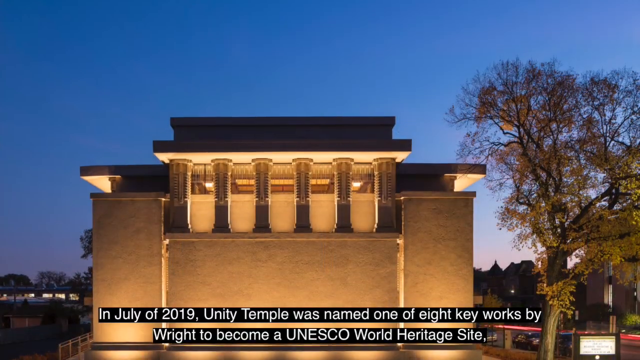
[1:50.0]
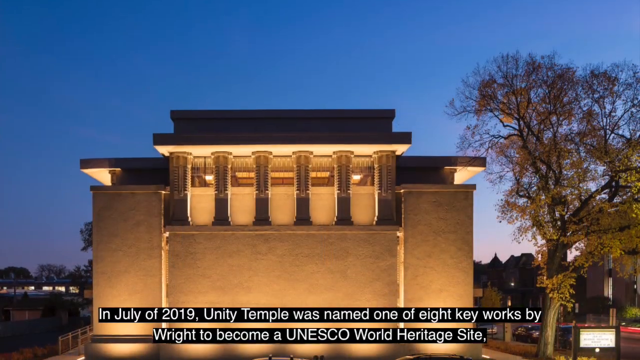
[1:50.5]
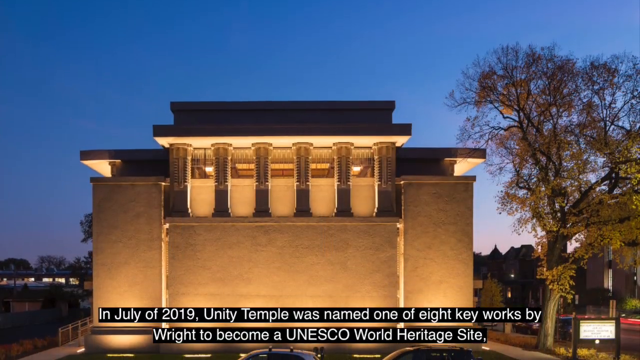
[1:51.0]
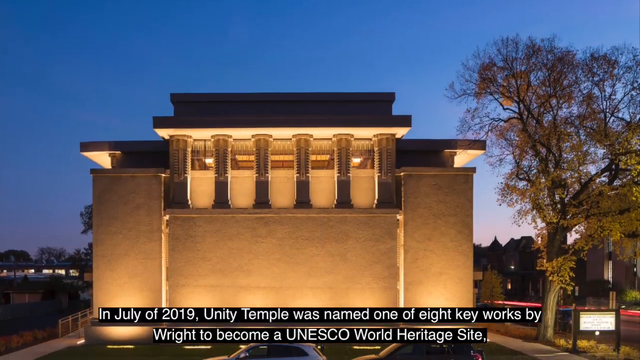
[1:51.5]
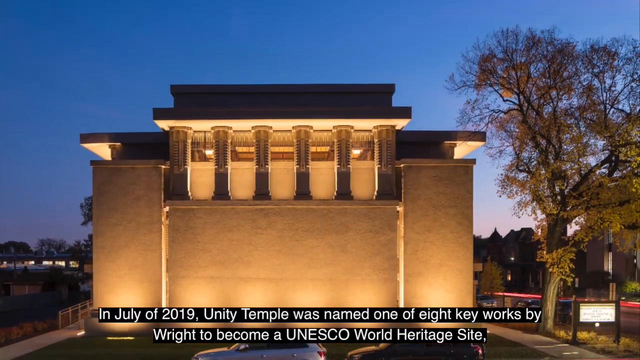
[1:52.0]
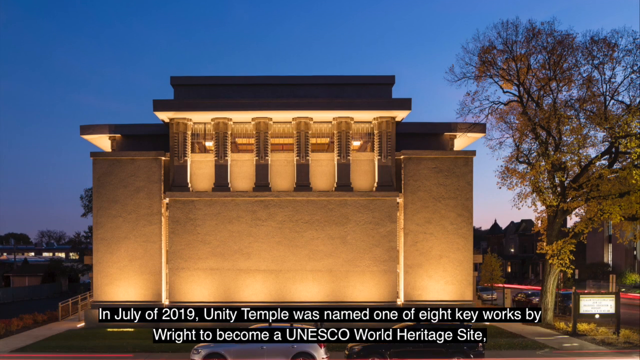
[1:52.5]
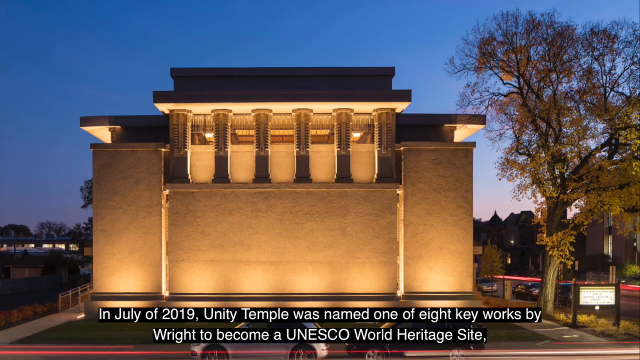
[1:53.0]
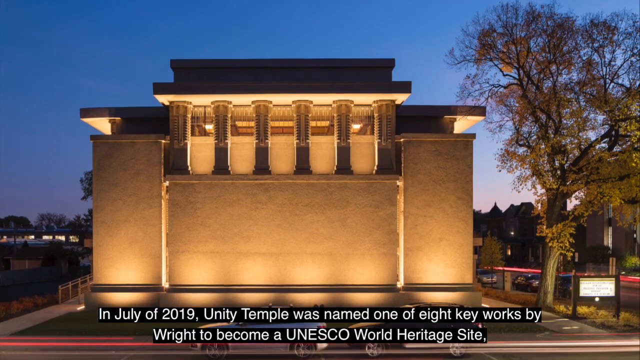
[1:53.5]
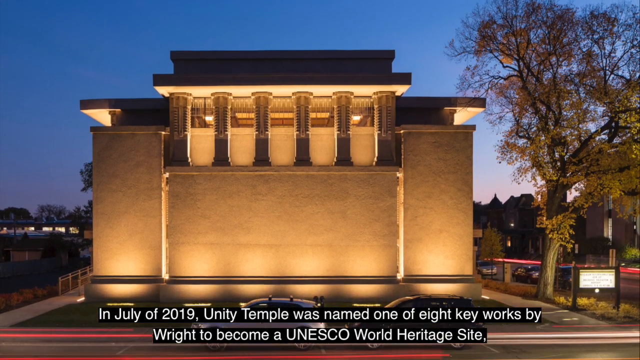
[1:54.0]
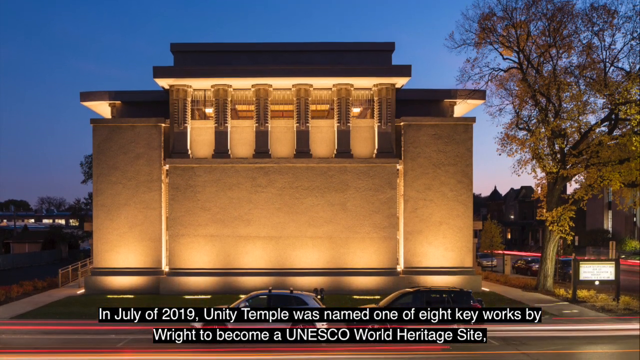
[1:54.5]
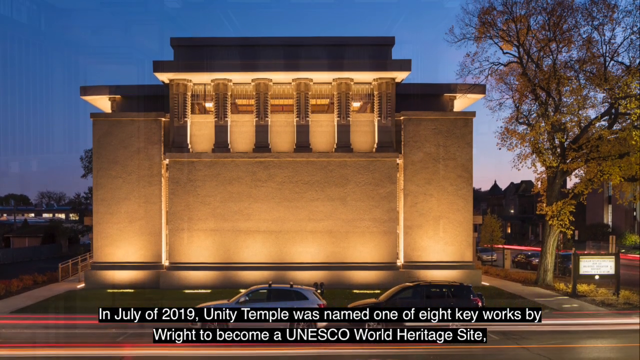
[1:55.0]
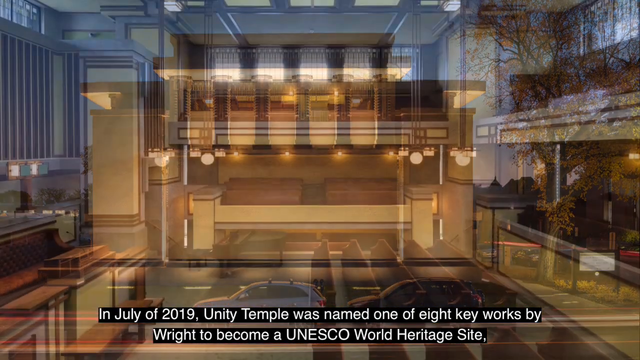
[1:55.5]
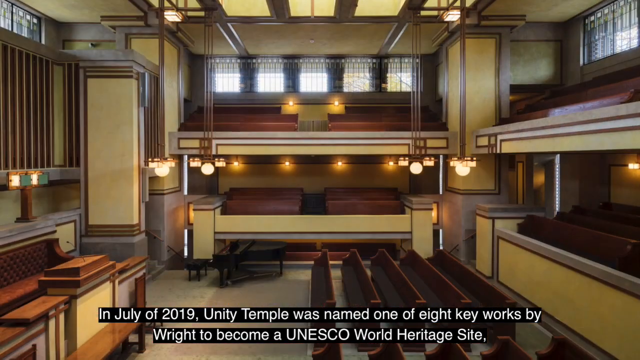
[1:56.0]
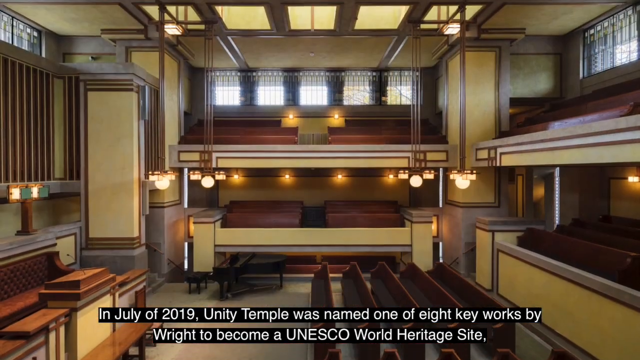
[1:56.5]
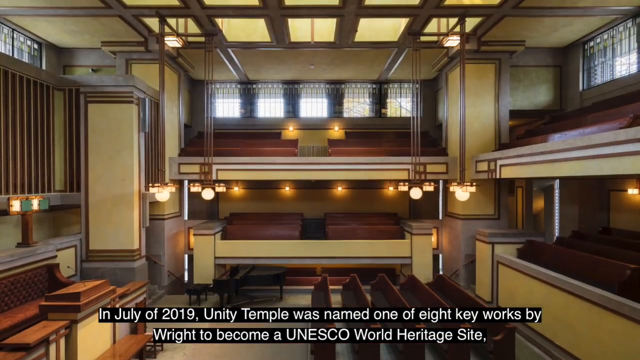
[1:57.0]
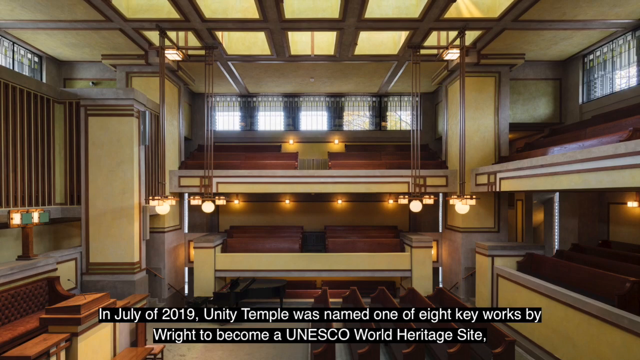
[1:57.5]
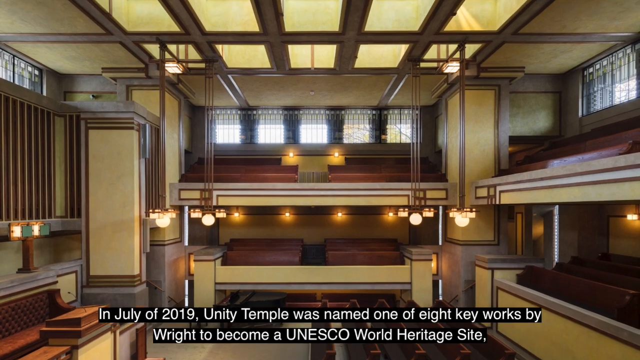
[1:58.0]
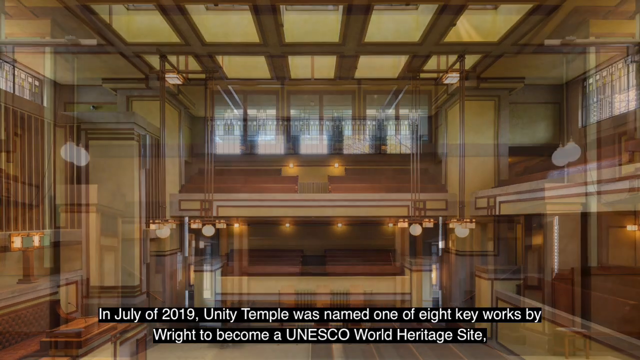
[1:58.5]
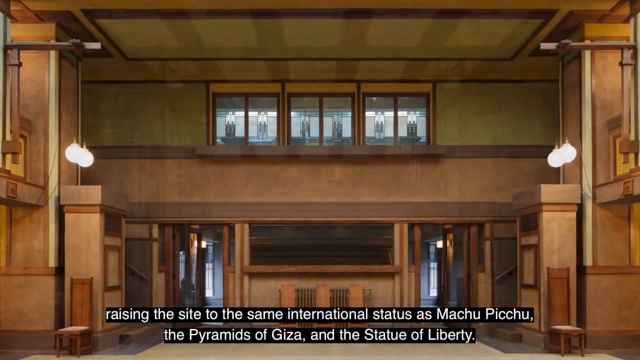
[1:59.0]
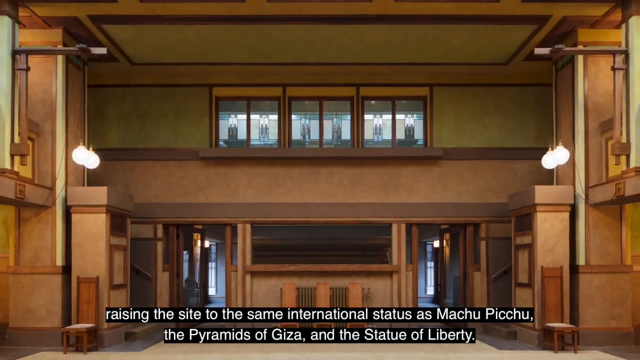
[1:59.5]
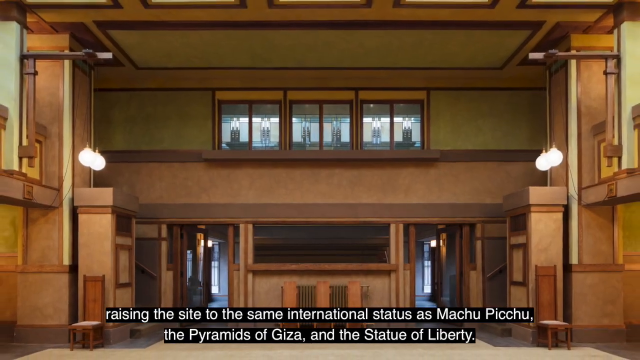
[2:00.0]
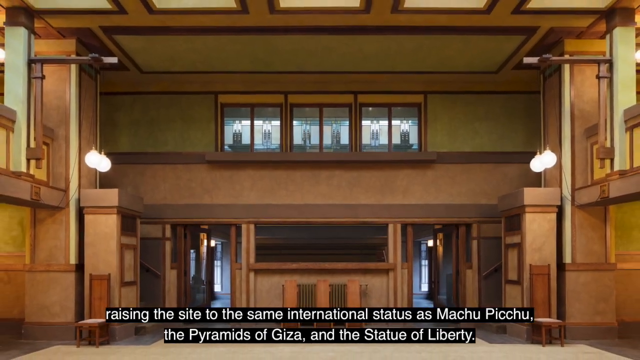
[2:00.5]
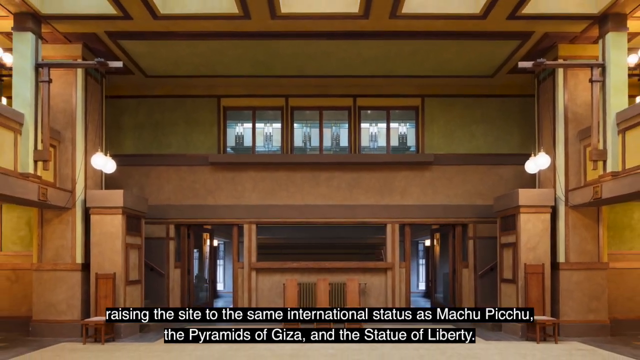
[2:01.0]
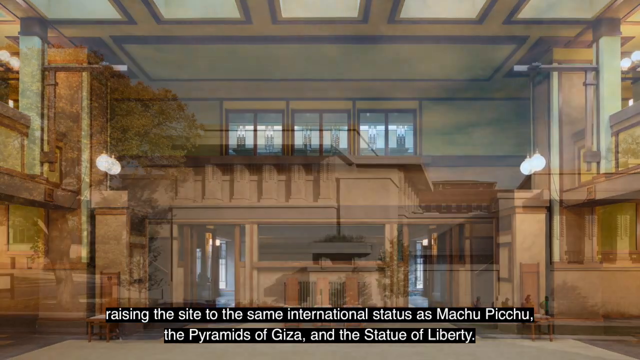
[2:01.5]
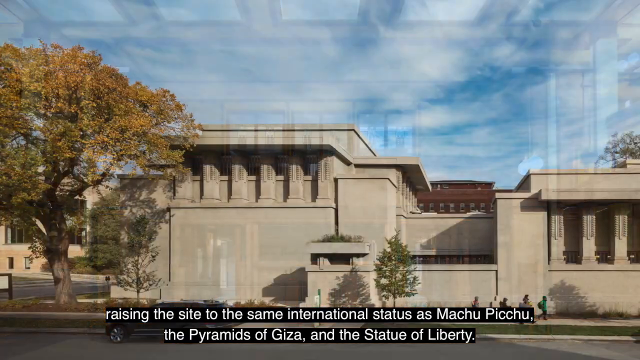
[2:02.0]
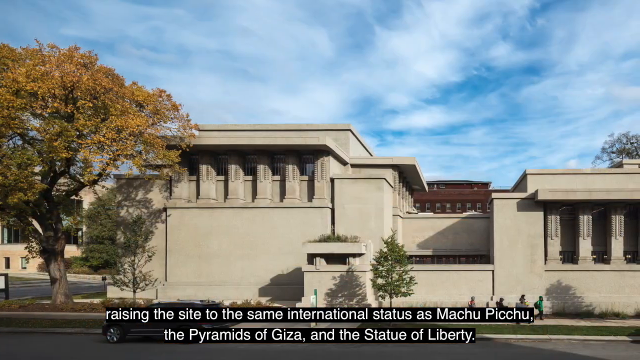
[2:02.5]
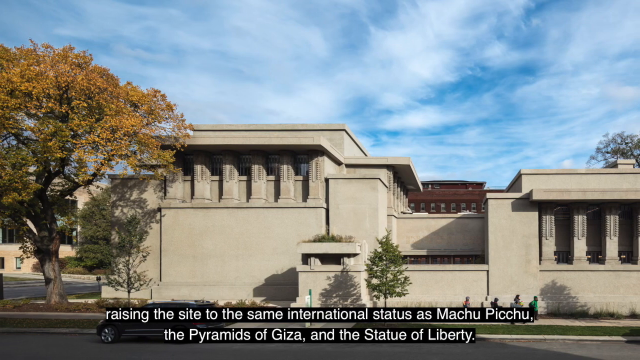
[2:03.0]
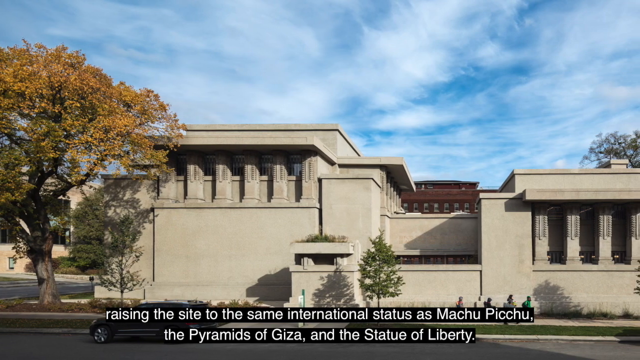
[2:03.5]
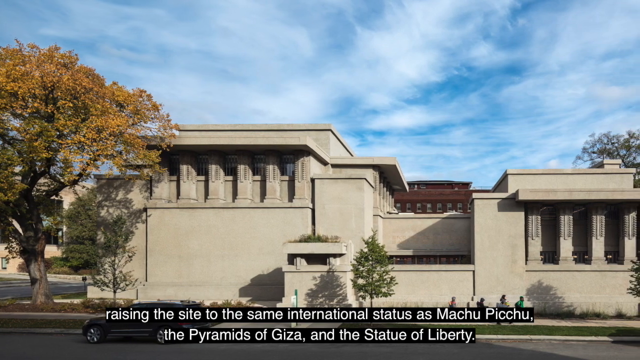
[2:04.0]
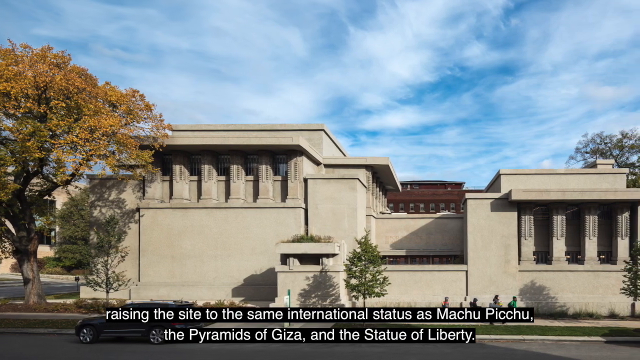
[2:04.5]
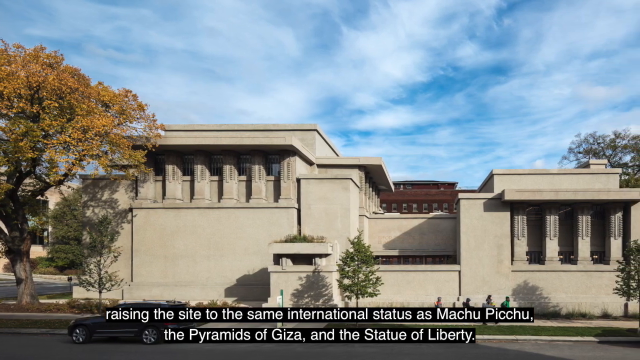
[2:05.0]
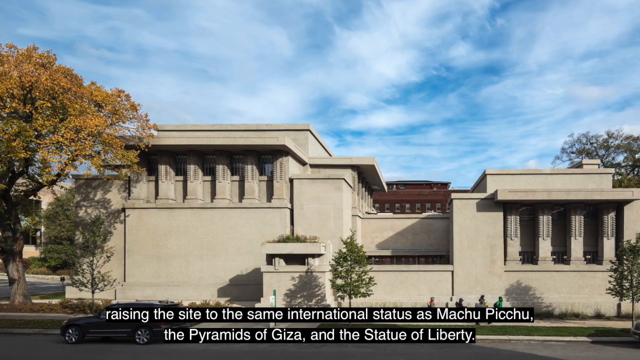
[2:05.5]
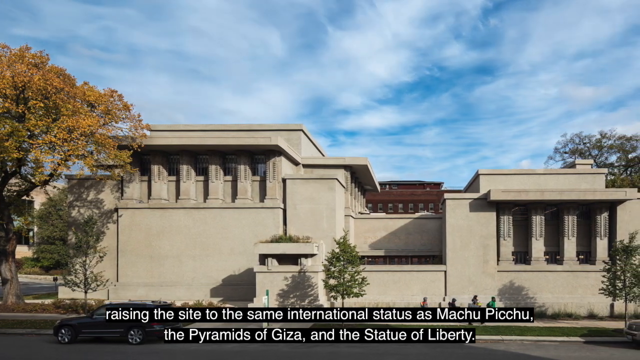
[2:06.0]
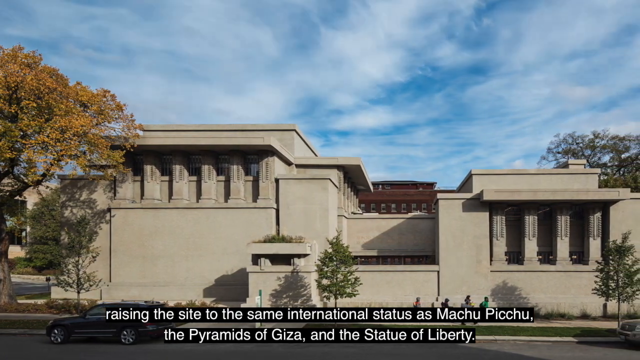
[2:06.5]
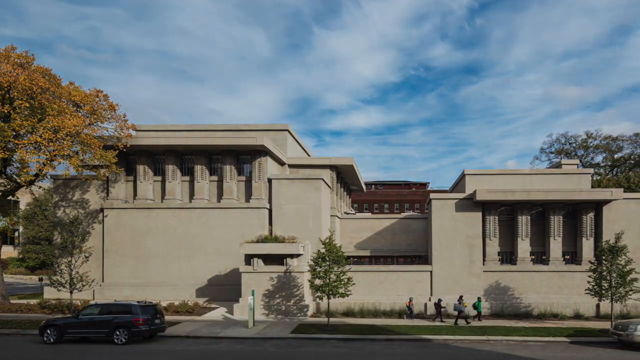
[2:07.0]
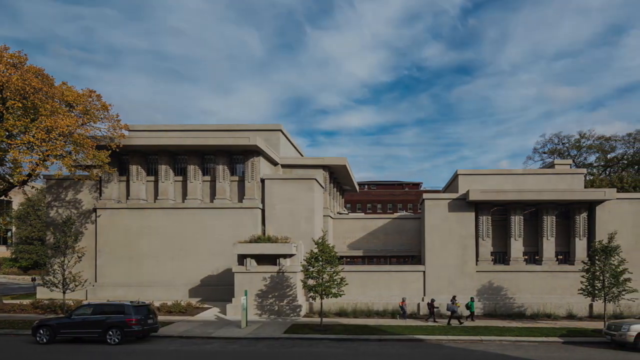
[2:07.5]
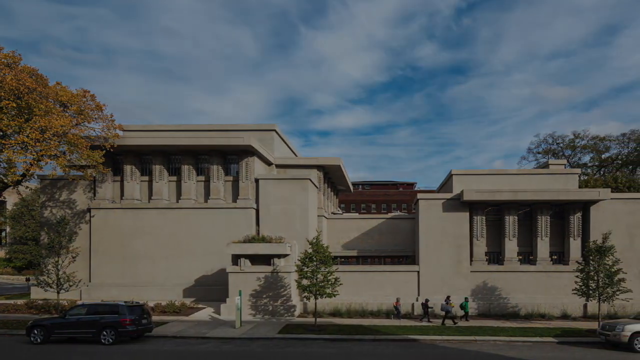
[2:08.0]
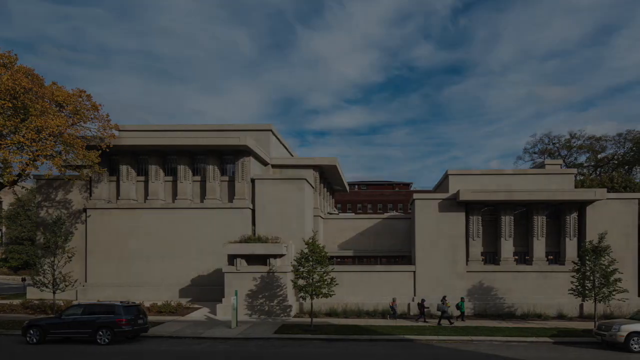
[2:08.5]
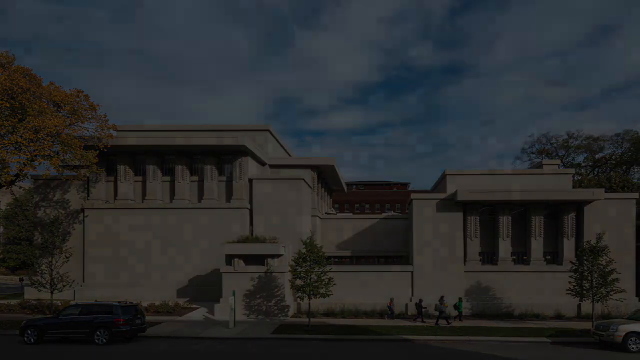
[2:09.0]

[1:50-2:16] A shot shows one of the facades of the temple in the early evening; there is still light in the sky, although the sun has set. The temple is lit from the outside, and the gray concrete appears to glow gold against the blue sky. The camera pans down. Inside the temple, the camera pans from the floor upward, showing the lit hanging lights and the rectangular windows. The skylights and transom lights are full of art glass letting light in from the outside. The painting inside is in gold, brown and ochre, and the pews are arranged in neat, orderly rectangles. The camera pans upward. The same room is then seen from the other angle, the back, where the transom lights shine and two doors enter the main worship space. The next shot is of the outside, with an autumn-turning tree on the left-hand side and a blue and white sky above. The camera pans across the face of the building, and the video fades to black. During this time, the captions underneath state that in July of 2019, Unity Temple was named one of eight key works by Wright to become a UNESCO World Heritage Site, raising the site to the same international status as Machu Picchu, the Pyramids of Giza, and the Statue of Liberty.